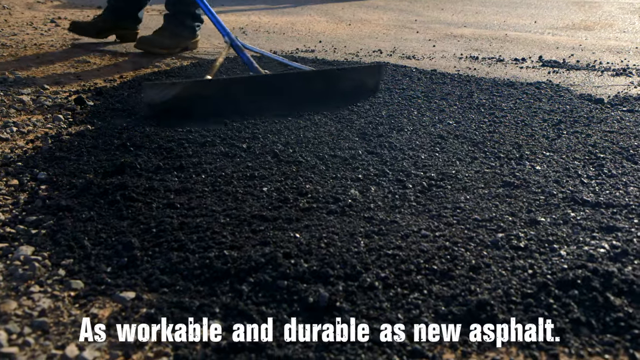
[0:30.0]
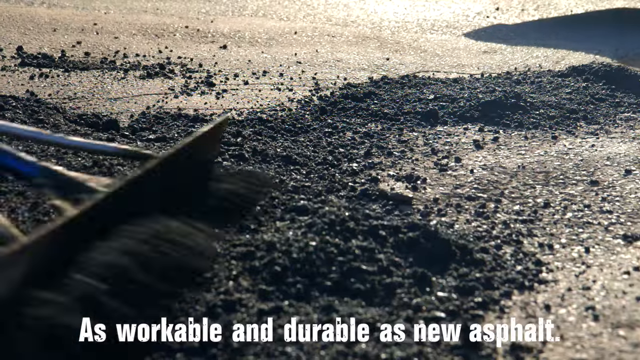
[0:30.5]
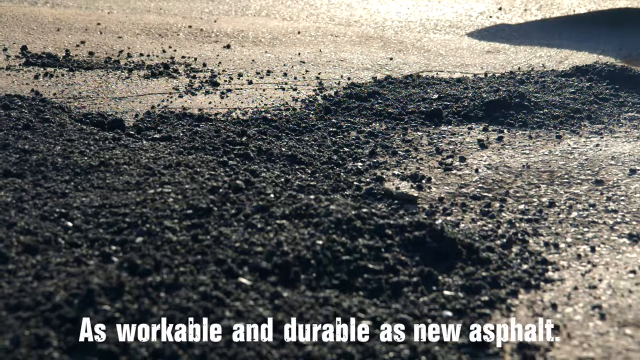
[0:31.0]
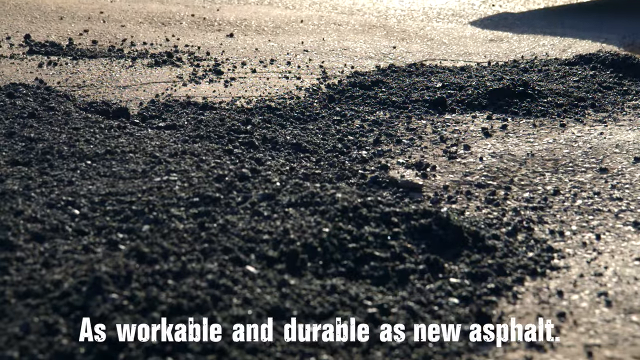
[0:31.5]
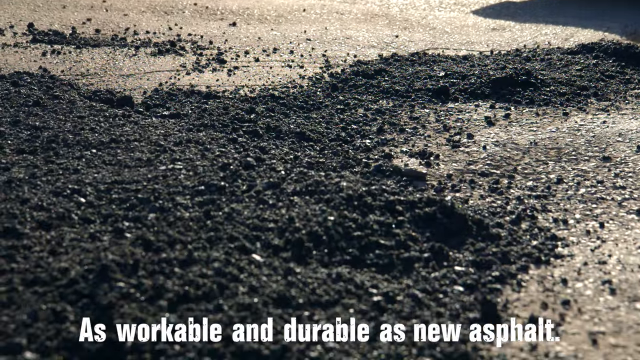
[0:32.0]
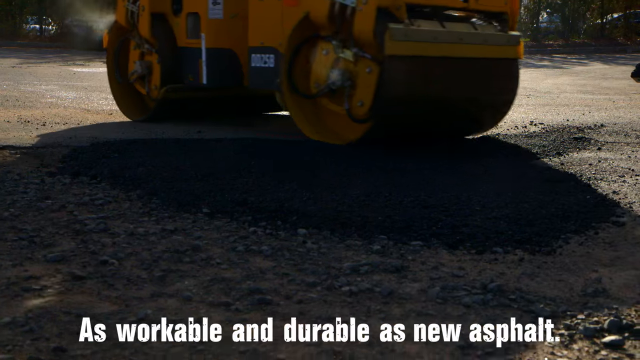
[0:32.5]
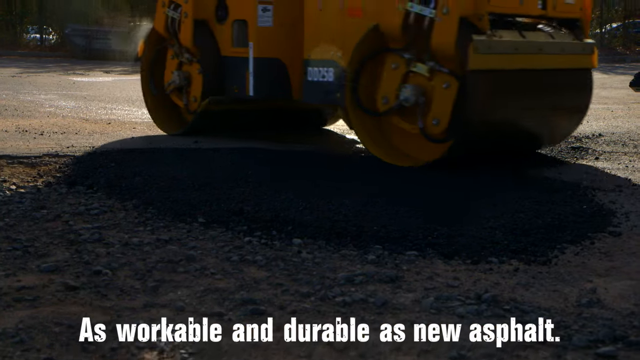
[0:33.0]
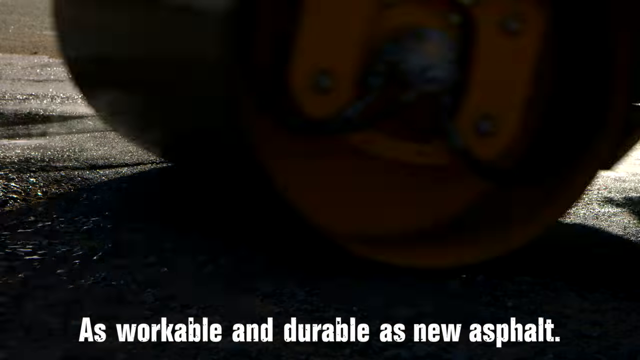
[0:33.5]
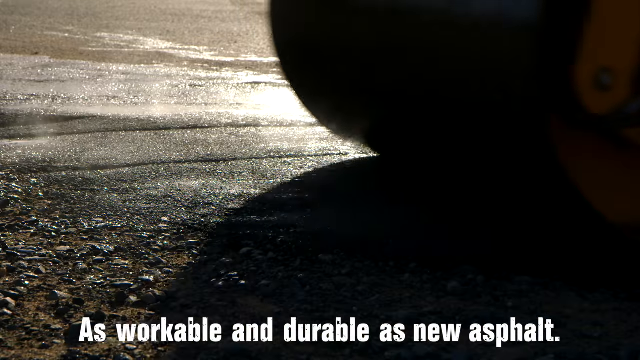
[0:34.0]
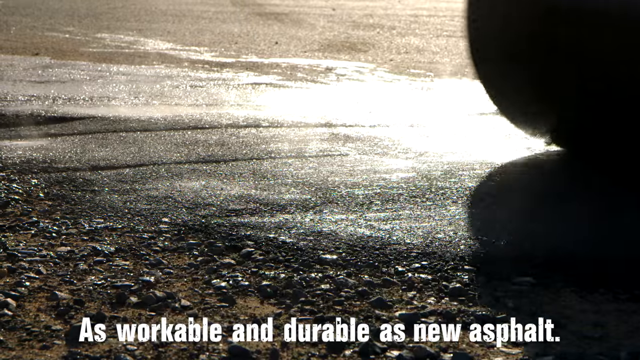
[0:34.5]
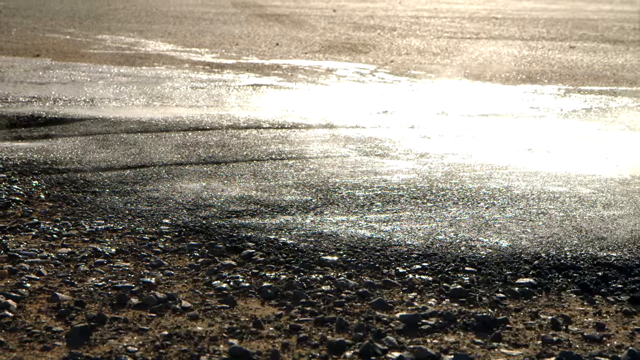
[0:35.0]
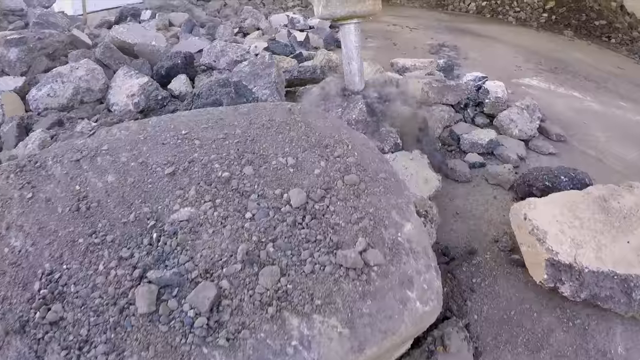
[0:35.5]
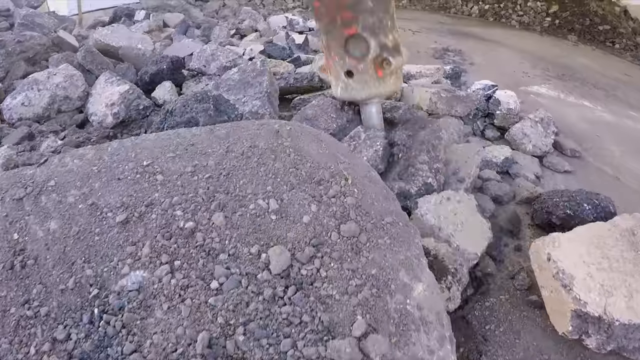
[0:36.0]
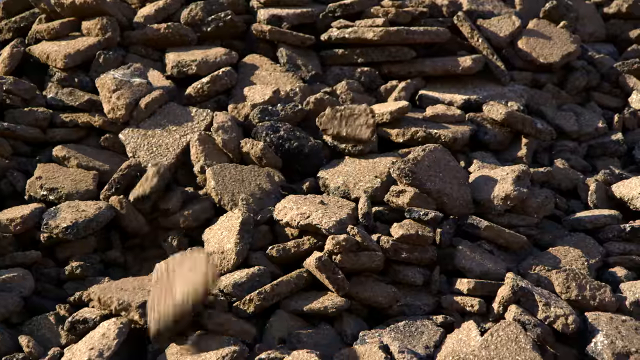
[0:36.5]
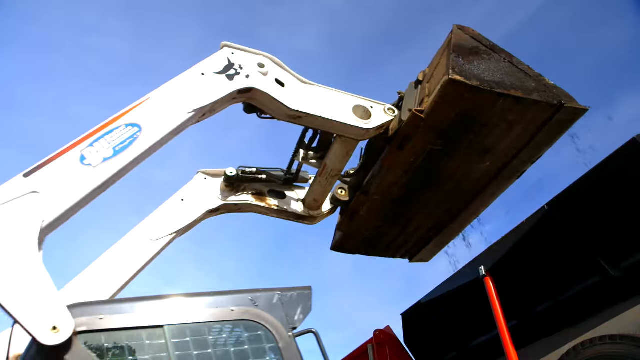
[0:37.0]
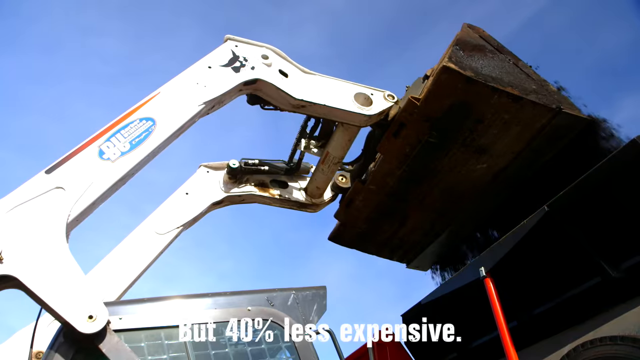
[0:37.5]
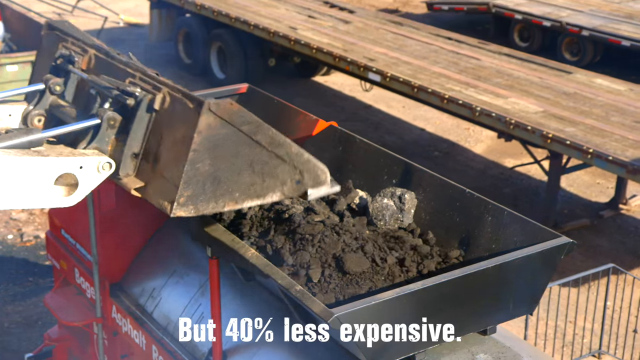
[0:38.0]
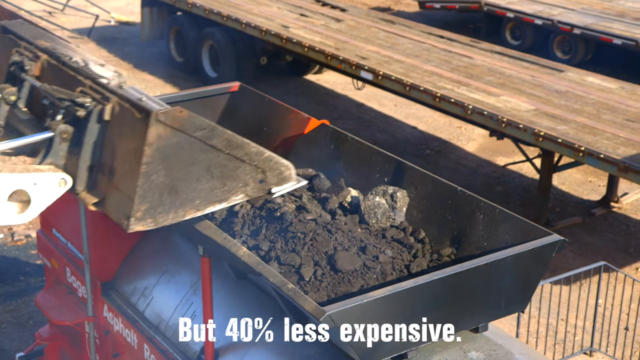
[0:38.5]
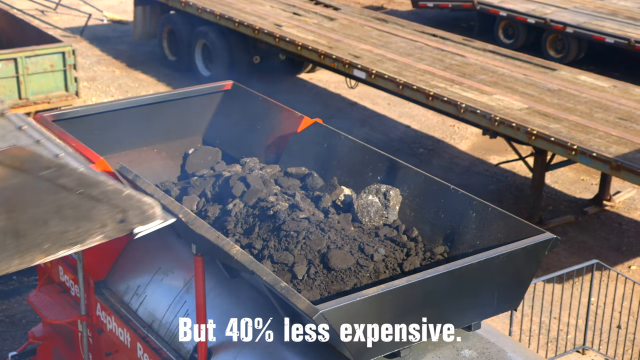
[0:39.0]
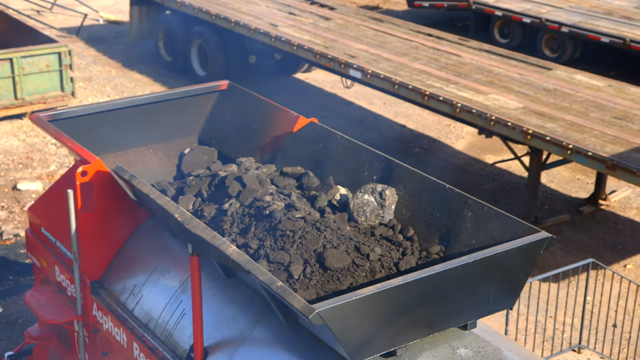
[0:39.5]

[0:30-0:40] A person drags a wide trowel over fine black road covering material on the road surface, and a yellow roller machine rolls over the top of the black material to flatten it. Steam comes out from the ground. Piles of broken-up rock material are lifted by large diggers and thrown into a big gray metal container. A man operates a bright red machine attached to the big gray container, which is open to the air; this machine is used to make the fine black road covering on the construction site.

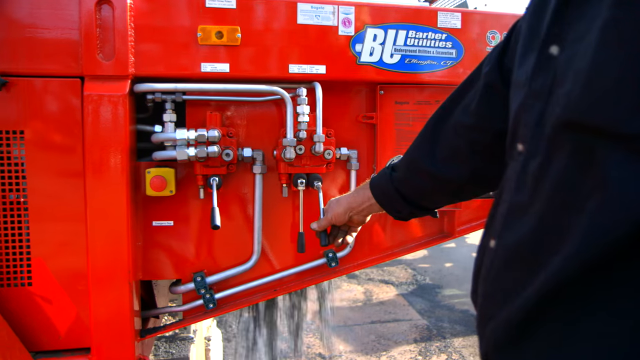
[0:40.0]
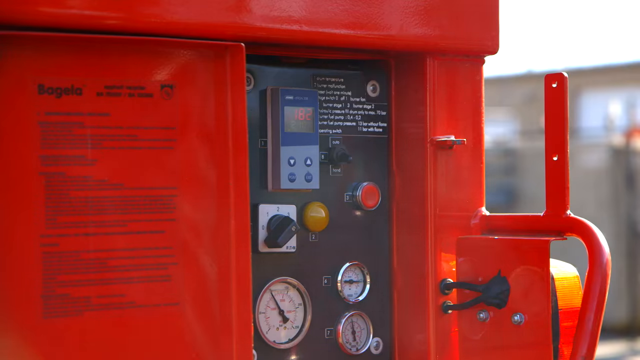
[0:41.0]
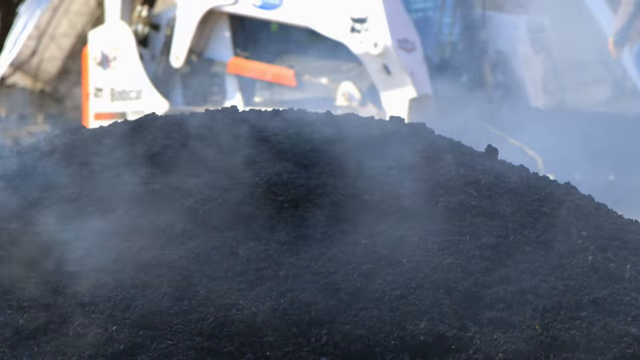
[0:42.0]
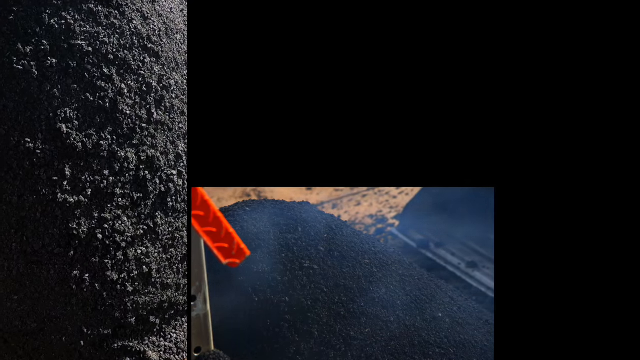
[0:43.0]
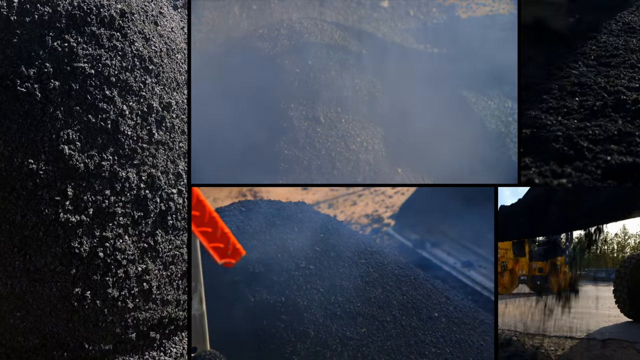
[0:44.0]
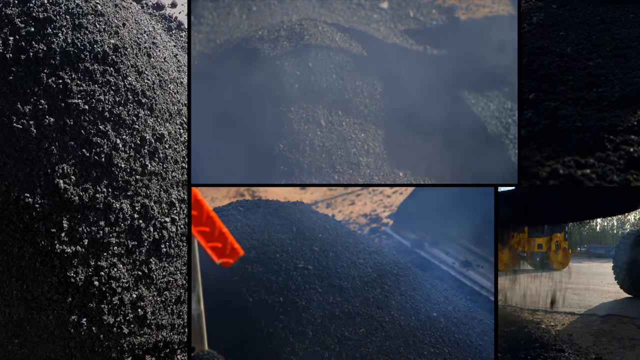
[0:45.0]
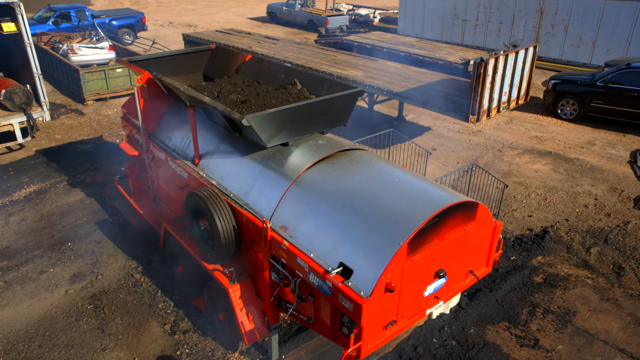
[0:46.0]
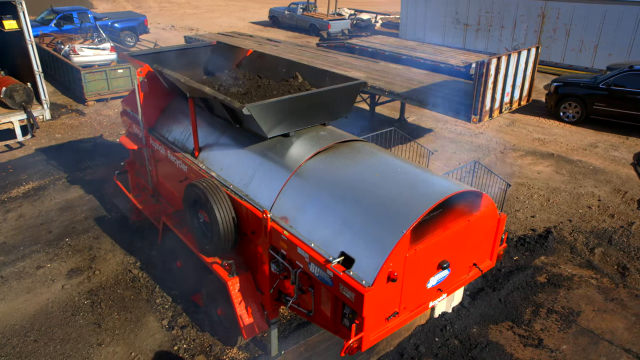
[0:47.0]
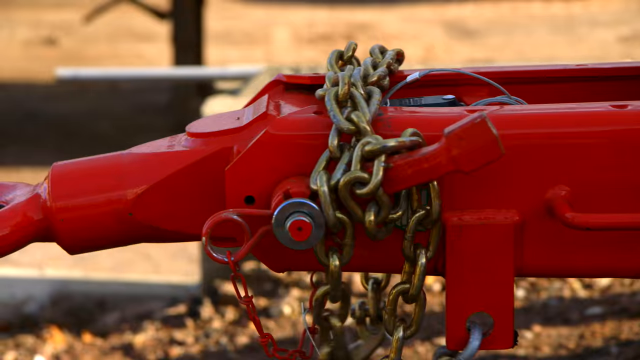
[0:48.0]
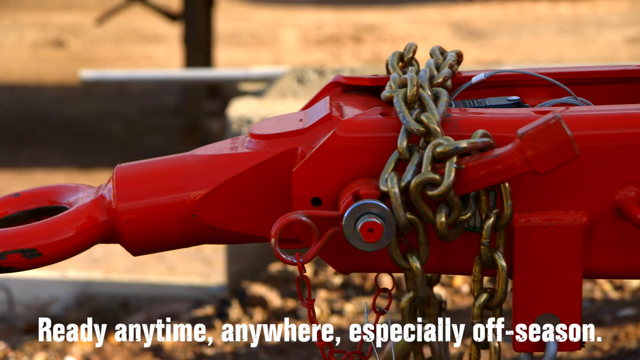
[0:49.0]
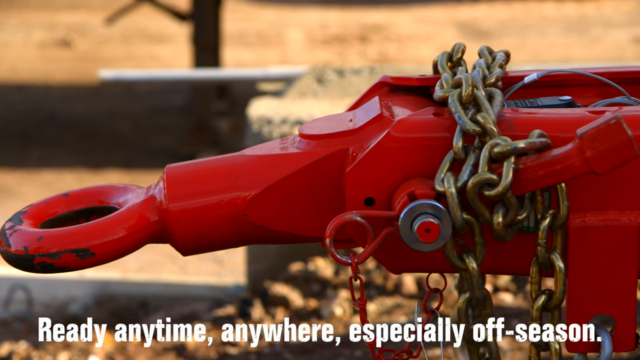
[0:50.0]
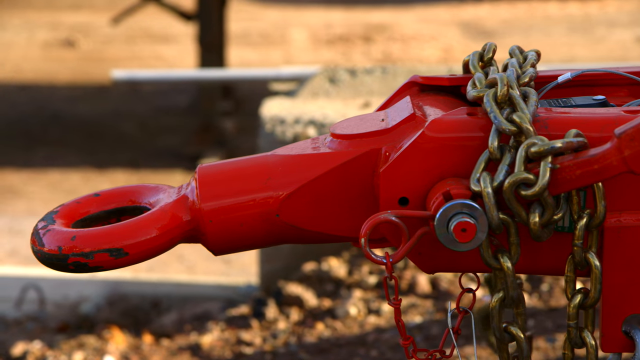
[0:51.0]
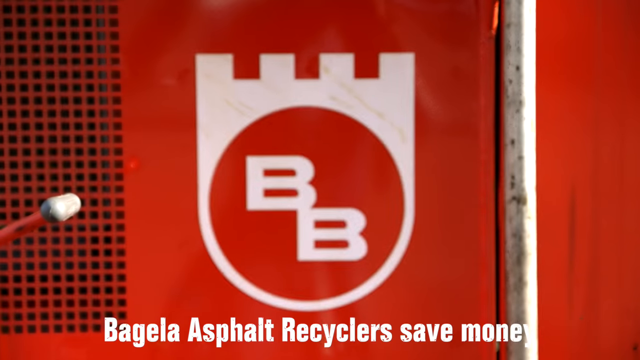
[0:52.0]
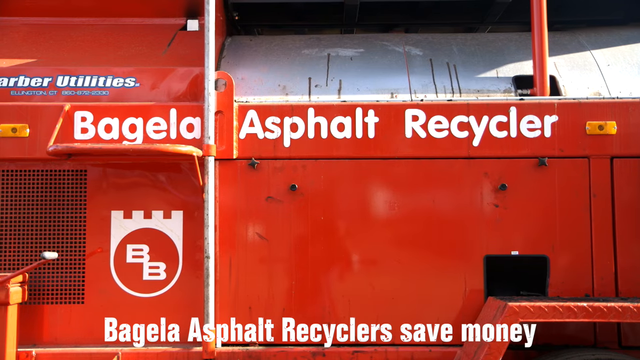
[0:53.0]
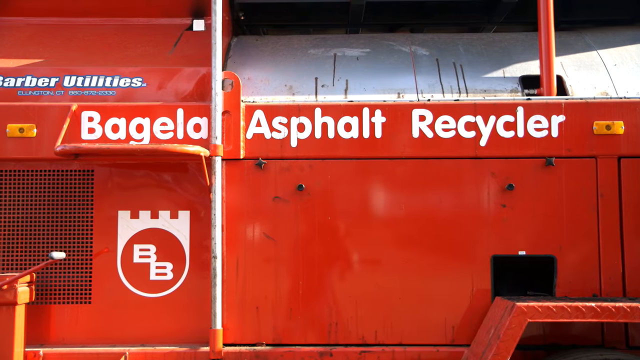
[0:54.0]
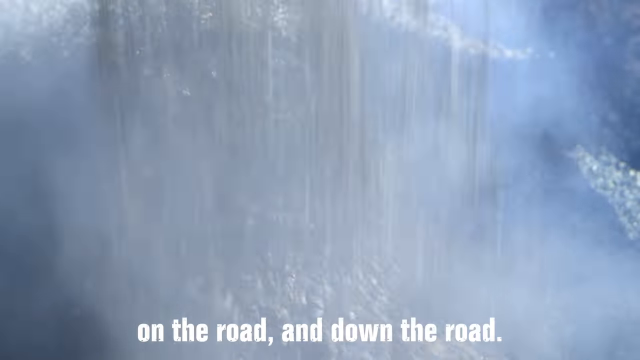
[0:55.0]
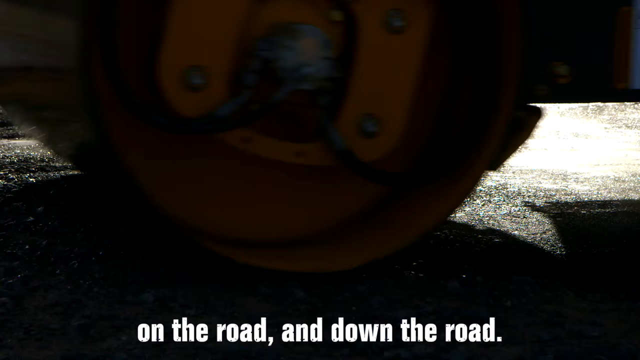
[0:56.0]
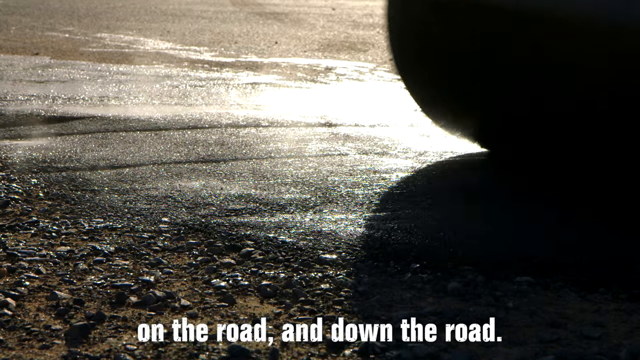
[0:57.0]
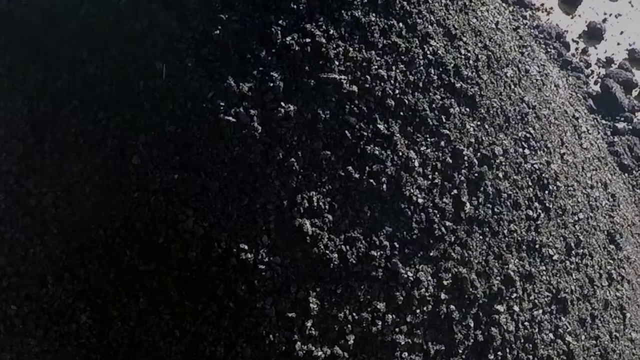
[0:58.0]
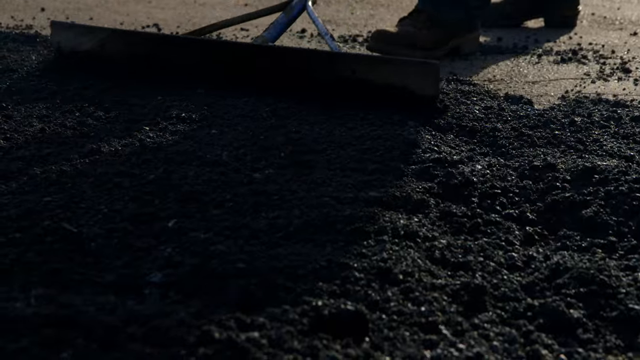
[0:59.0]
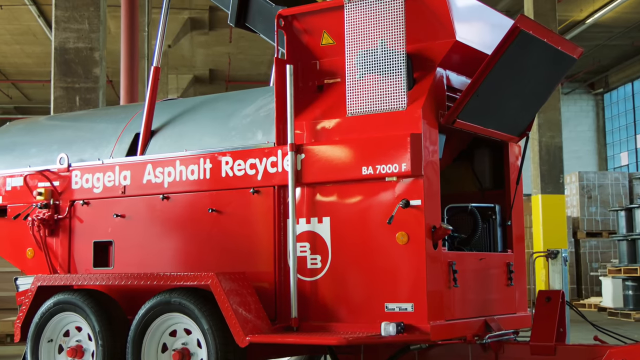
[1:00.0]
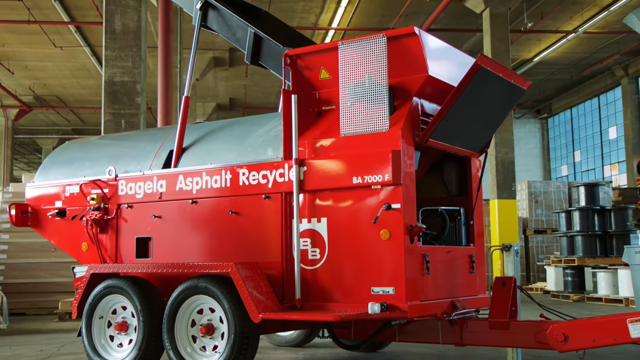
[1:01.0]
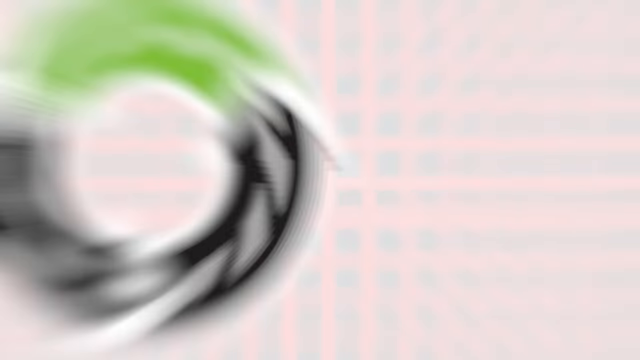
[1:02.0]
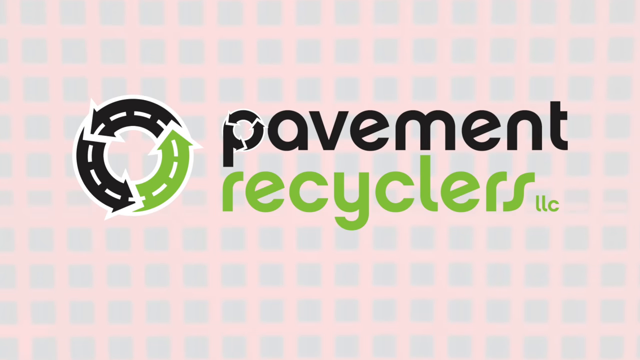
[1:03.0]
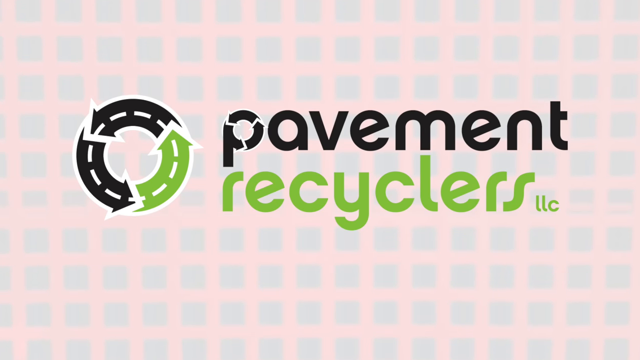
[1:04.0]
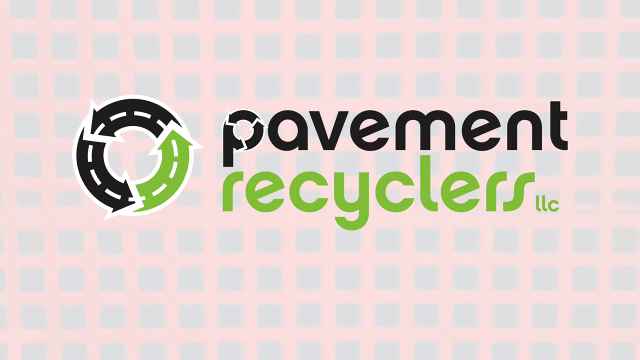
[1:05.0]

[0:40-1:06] A man operates a shiny red machine with white text on it that says "Bargella Asphalt Recycler" and a logo of a castle turret with a circle containing two interlocking capital B letters. Shots show fine black asphalt being made by the big red machine and different equipment shoveling broken bits of rock into a large open-top container. The man operates one of the black levers on the red machine, and a hot, steaming mound of black asphalt is released through a rotating drum at the bottom of the machine; the asphalt is used to cover the soil on the road. At the end, a circular logo with three interlocking arrows appears for a company called Pavement Recyclers LLC.